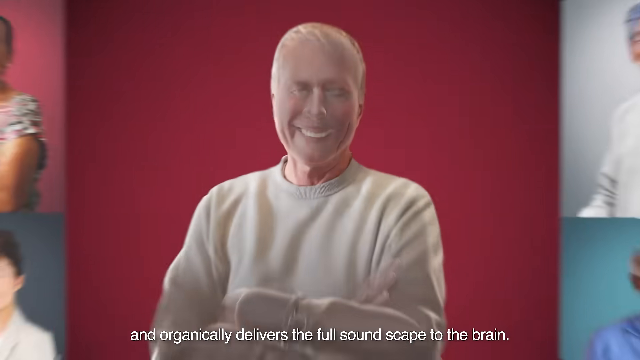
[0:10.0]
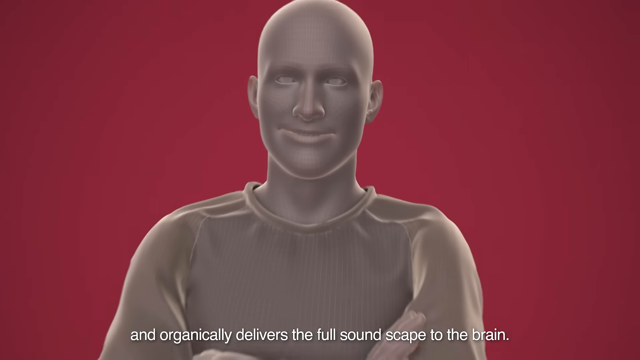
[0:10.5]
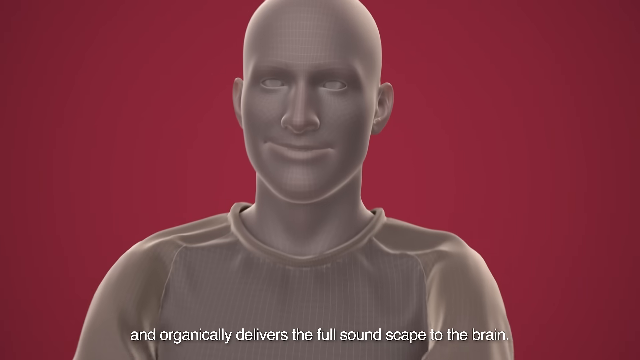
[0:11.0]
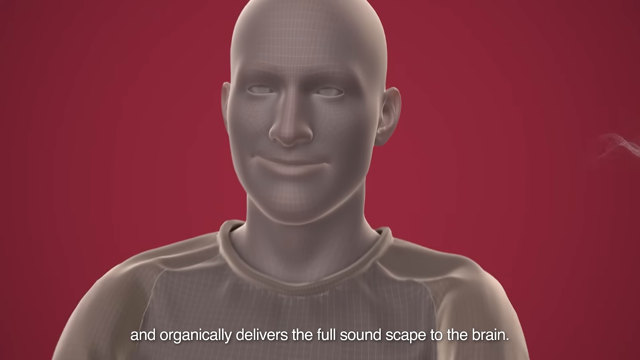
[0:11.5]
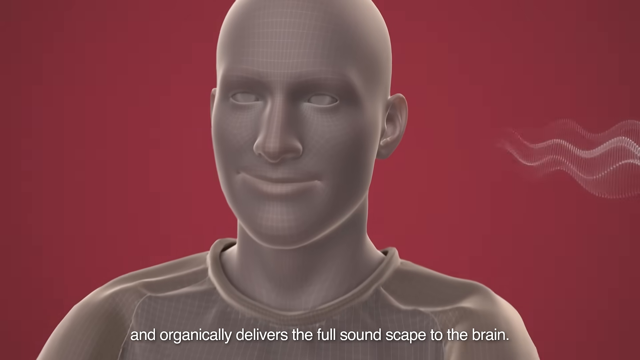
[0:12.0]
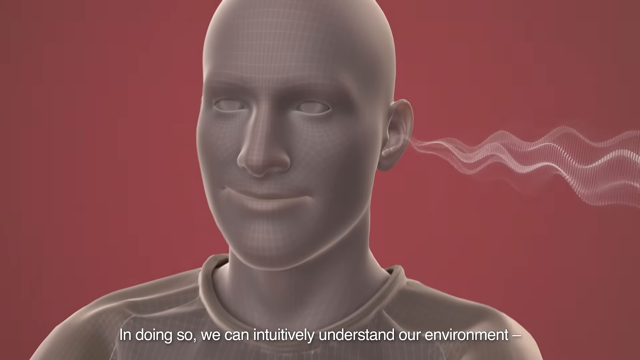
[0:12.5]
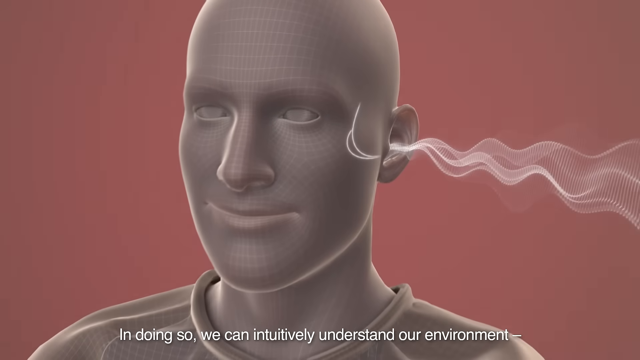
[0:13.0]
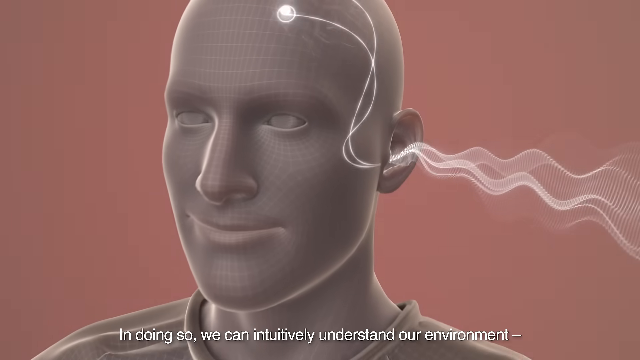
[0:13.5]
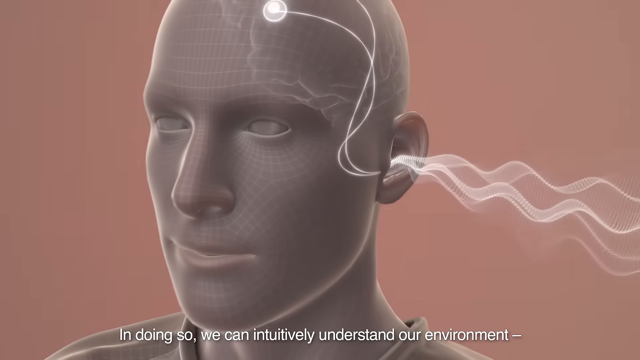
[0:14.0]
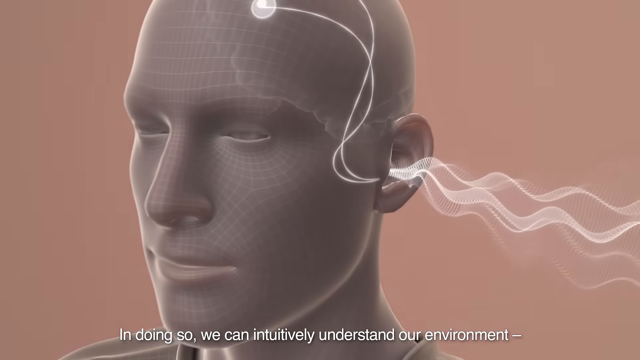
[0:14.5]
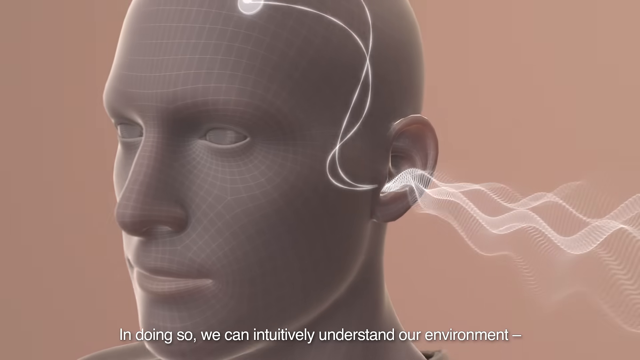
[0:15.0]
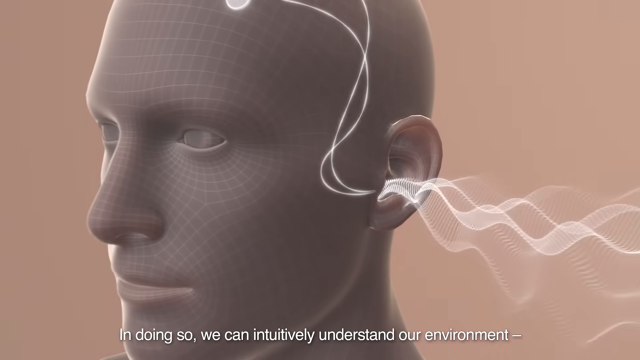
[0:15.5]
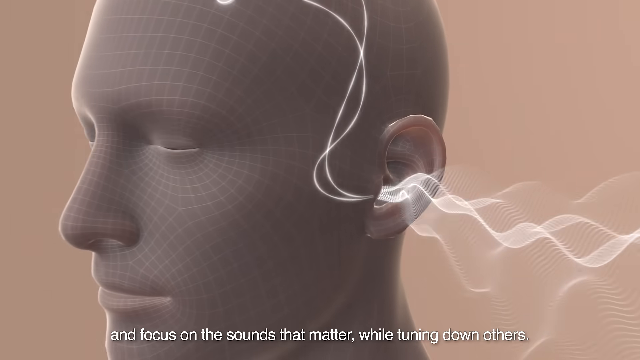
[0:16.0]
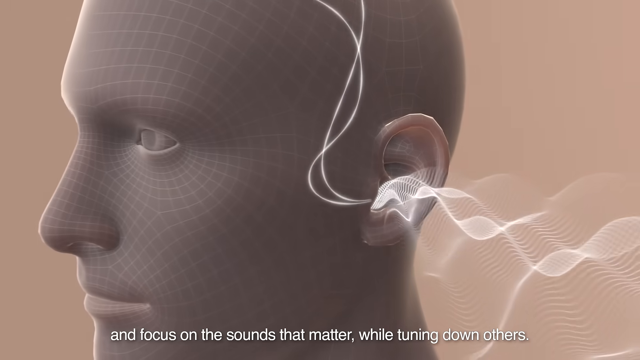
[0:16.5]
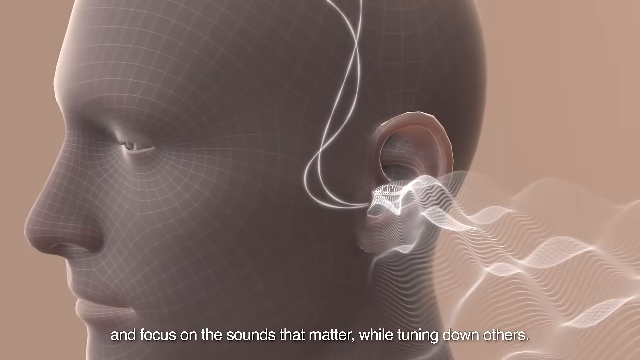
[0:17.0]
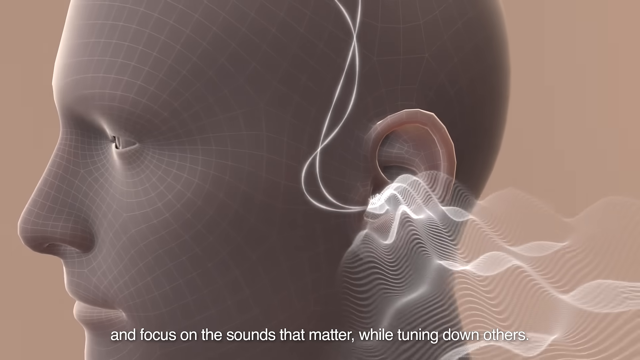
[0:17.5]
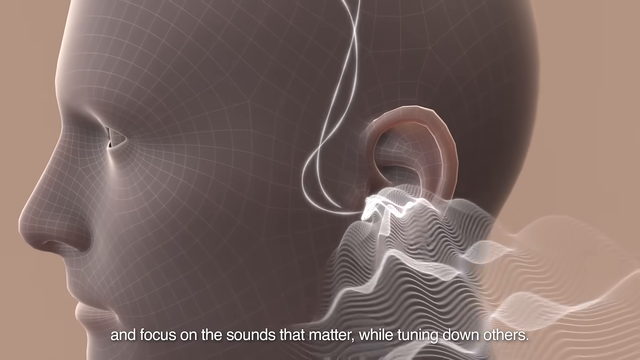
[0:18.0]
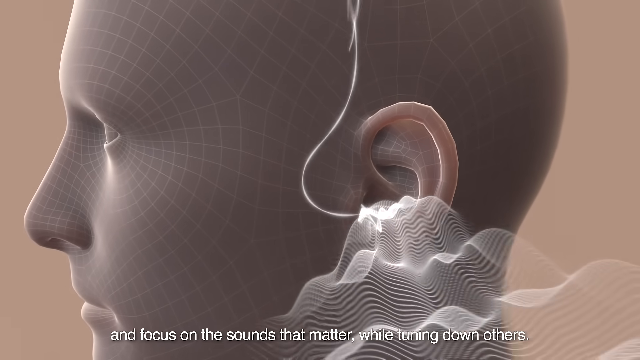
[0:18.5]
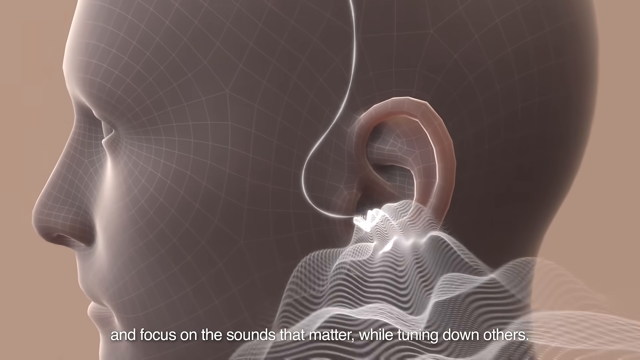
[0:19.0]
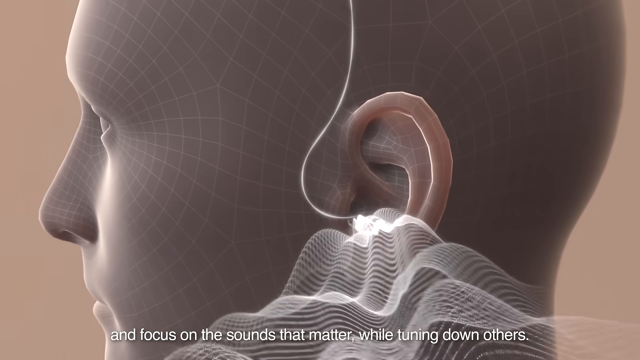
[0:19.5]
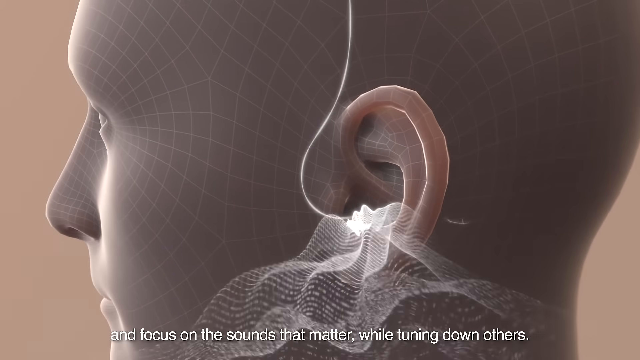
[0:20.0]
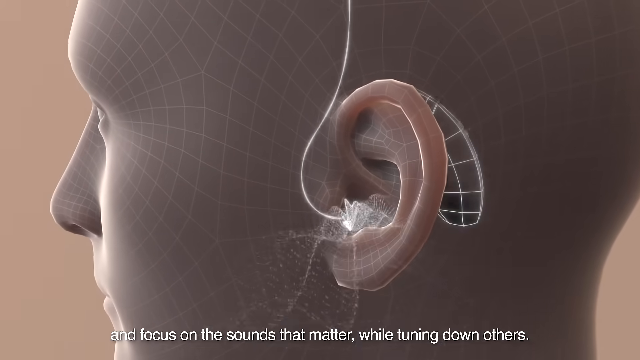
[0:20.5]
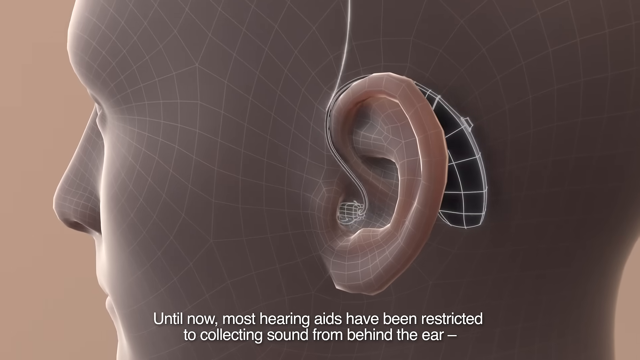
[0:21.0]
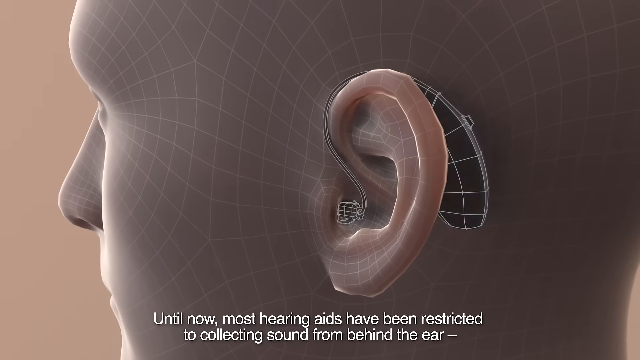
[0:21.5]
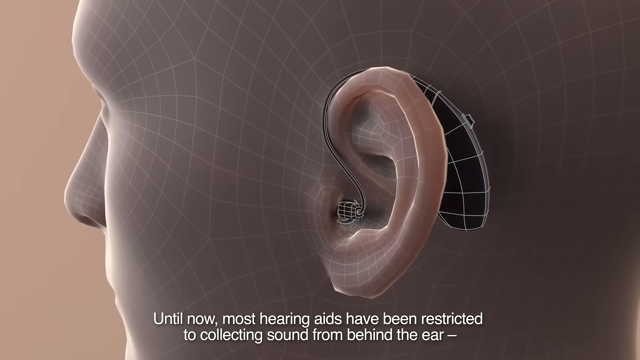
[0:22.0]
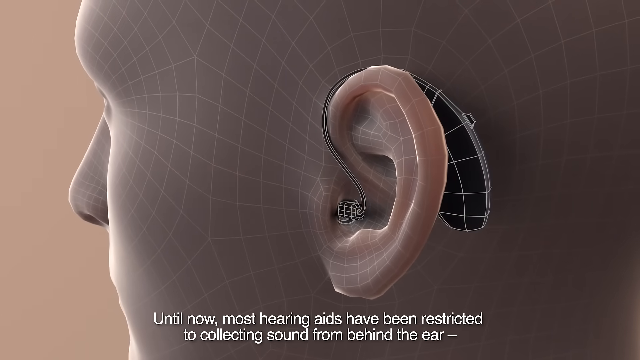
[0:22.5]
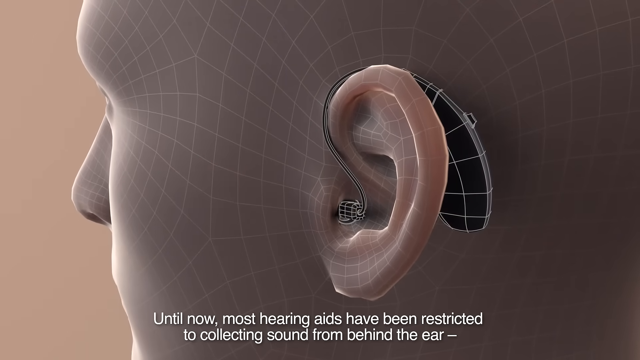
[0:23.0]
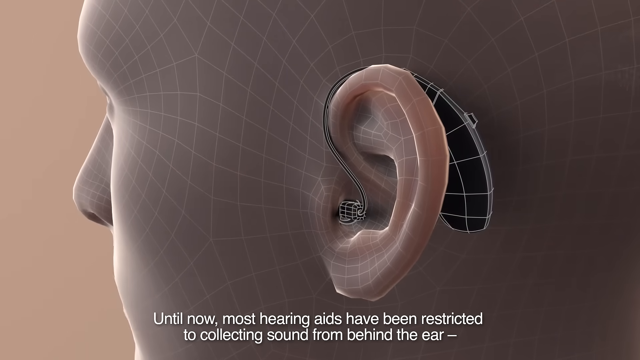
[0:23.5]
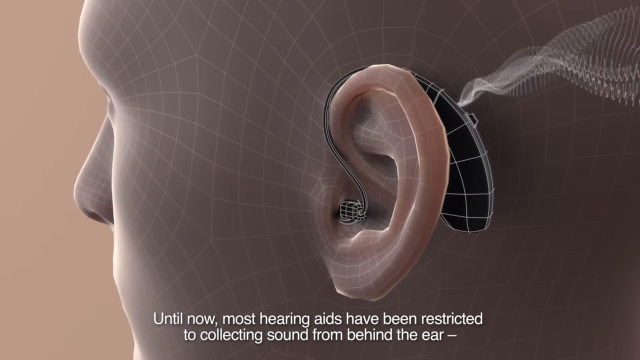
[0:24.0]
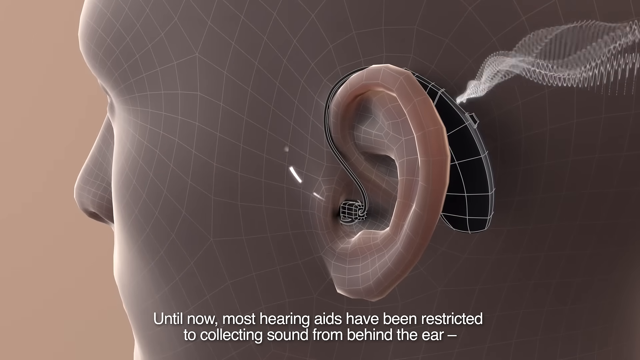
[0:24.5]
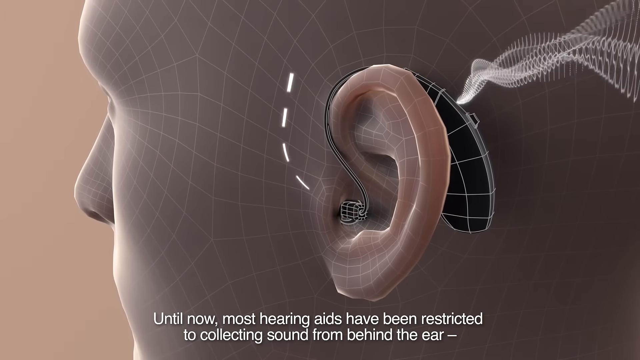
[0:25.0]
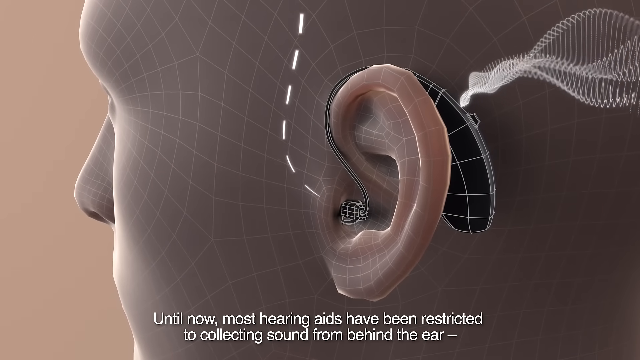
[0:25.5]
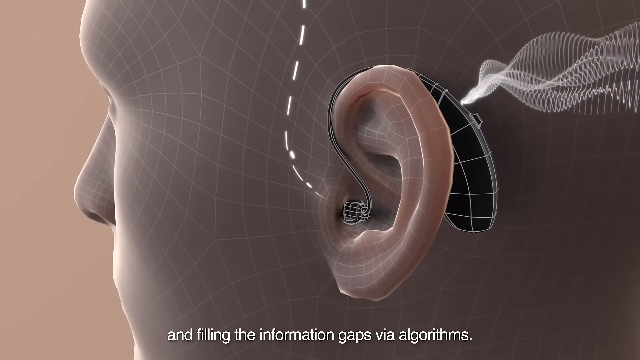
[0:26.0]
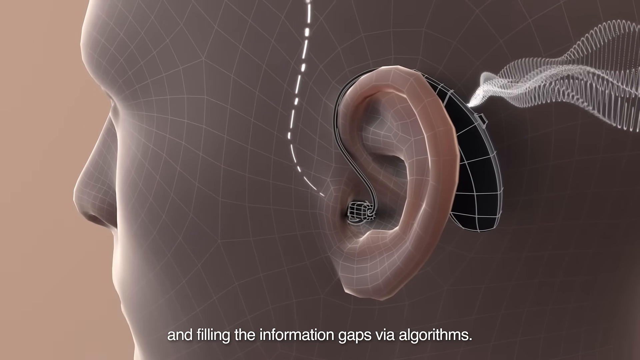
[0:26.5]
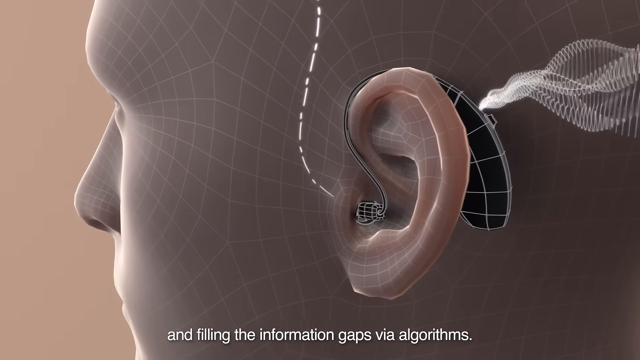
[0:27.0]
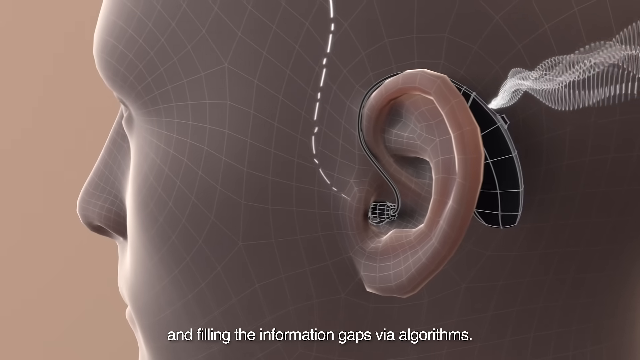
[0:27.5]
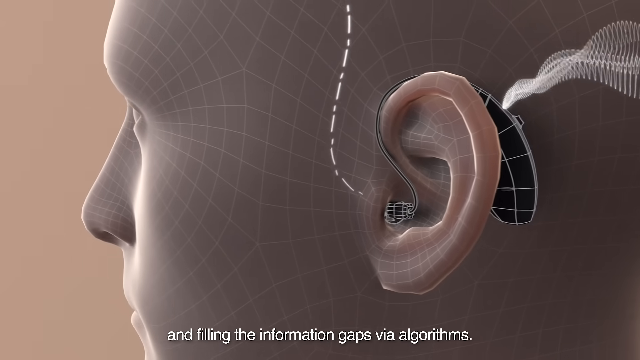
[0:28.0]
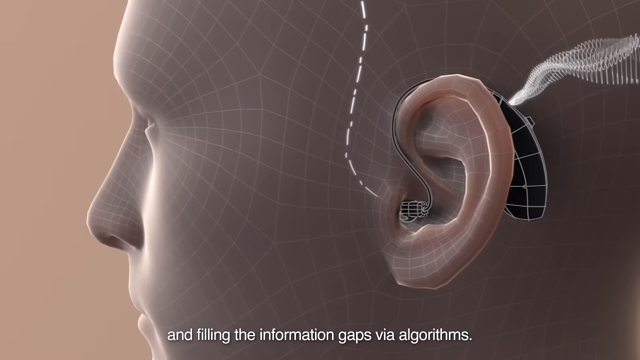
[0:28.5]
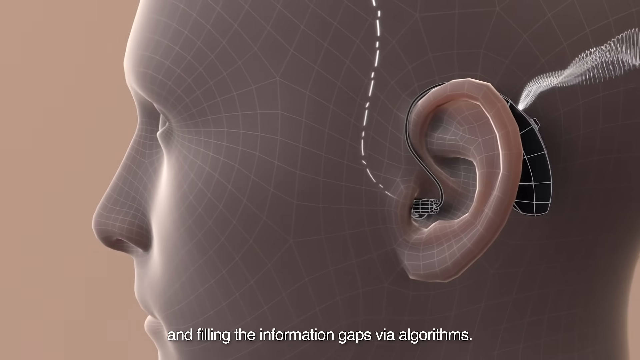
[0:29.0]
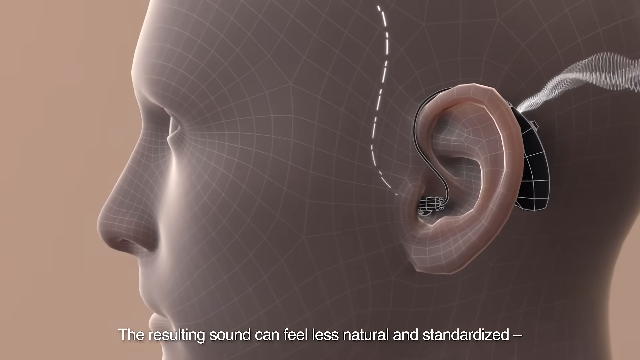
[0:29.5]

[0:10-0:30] A middle-aged black male, shown in rendered form, holds his arms and smiles; then a white male is shown smiling. A rendered image of a head follows, with sound waves entering it, and a hearing aid seems to be attached on the ear. The sound waves are shown entering the ear, and the waves or signals are then transmitted directly to the brain. The video goes on to show a hearing aid being attached at the back of the ear; the sound waves are now channeled through the hearing aid, which transmits the signal to the brain. A caption reads "until now most hearing aids have been".